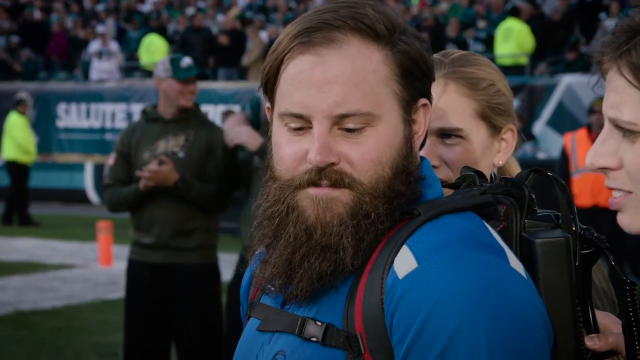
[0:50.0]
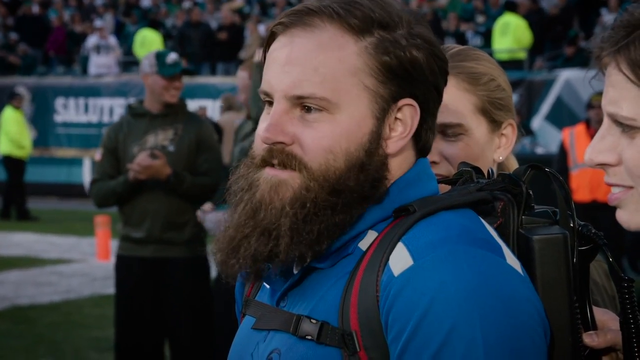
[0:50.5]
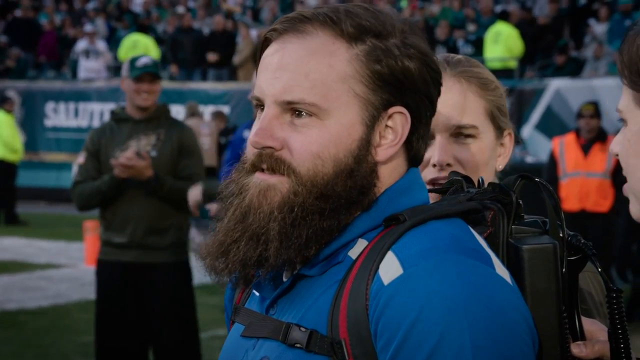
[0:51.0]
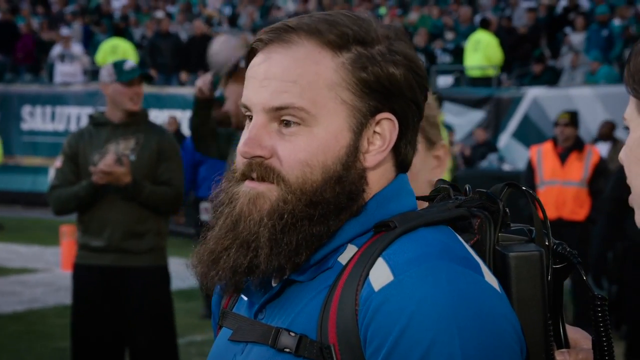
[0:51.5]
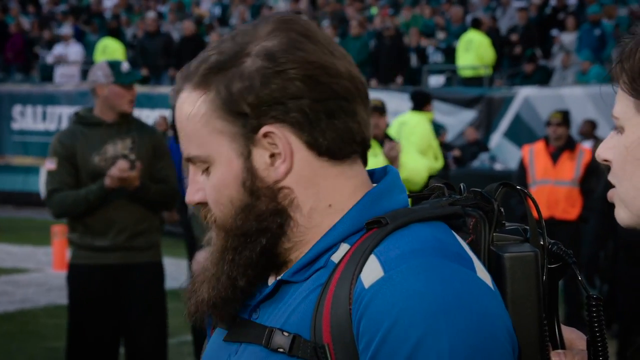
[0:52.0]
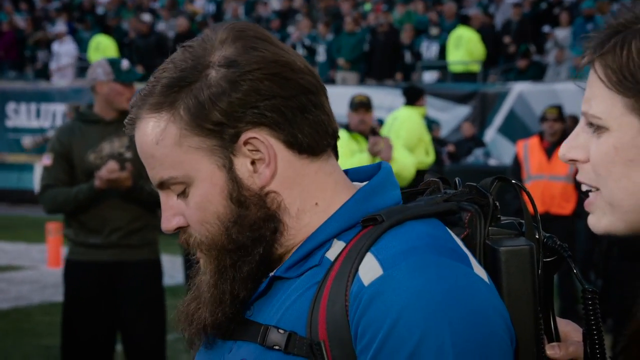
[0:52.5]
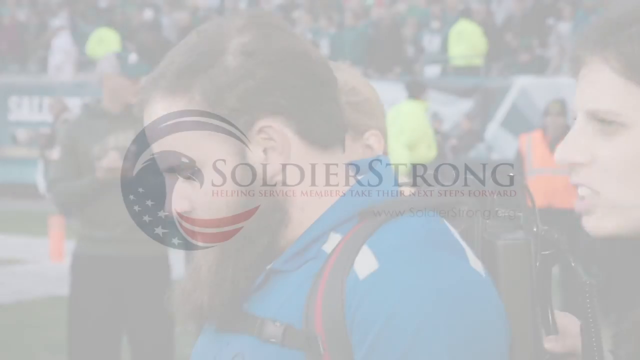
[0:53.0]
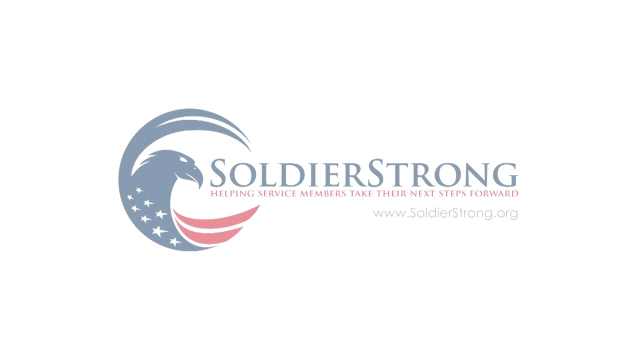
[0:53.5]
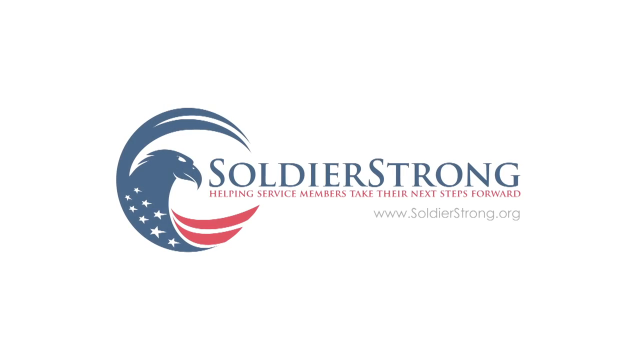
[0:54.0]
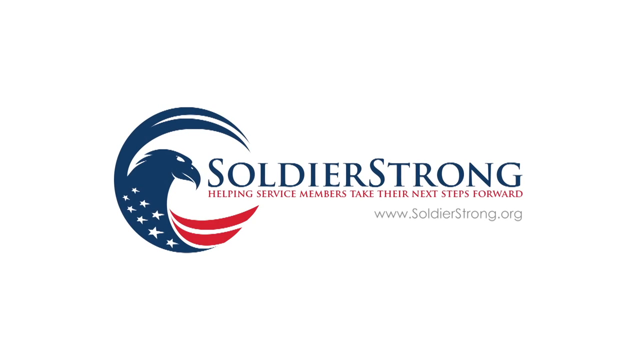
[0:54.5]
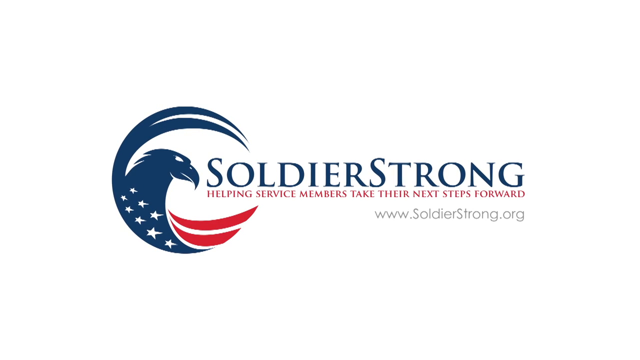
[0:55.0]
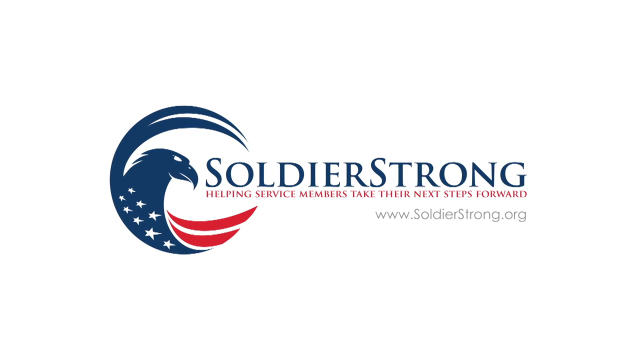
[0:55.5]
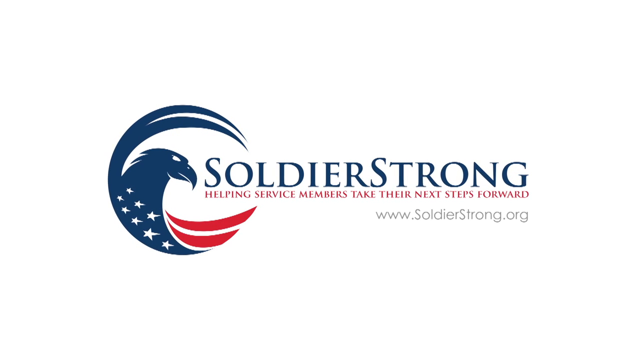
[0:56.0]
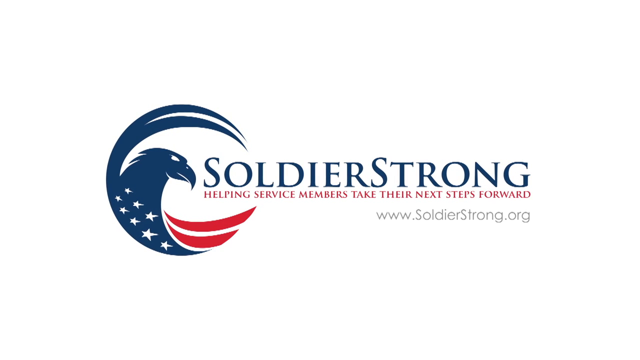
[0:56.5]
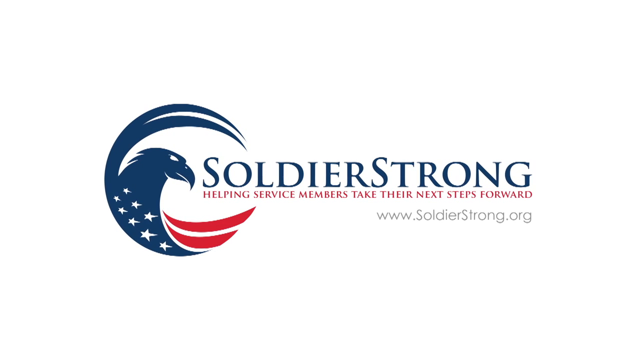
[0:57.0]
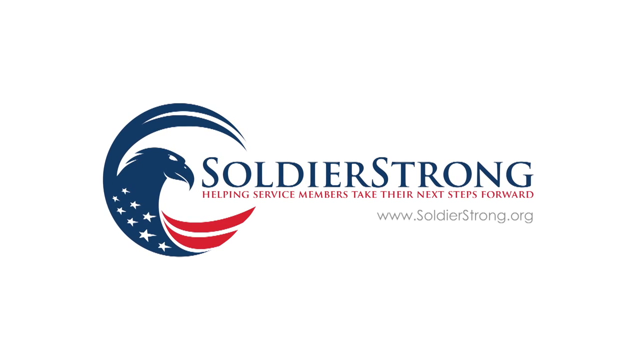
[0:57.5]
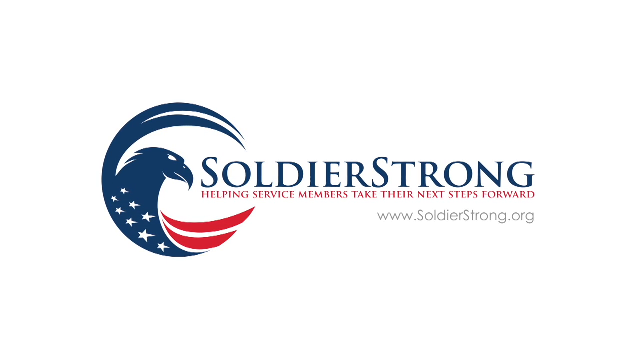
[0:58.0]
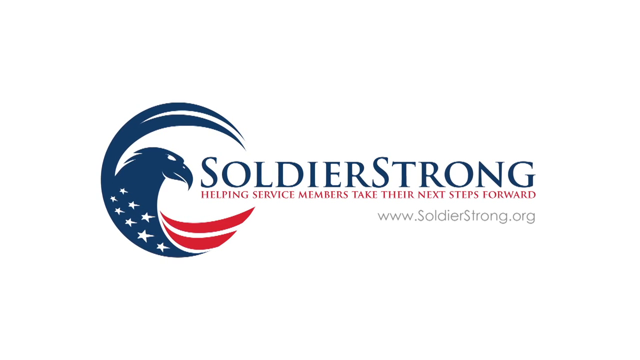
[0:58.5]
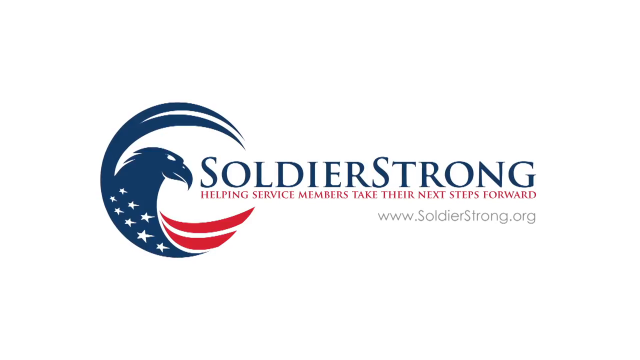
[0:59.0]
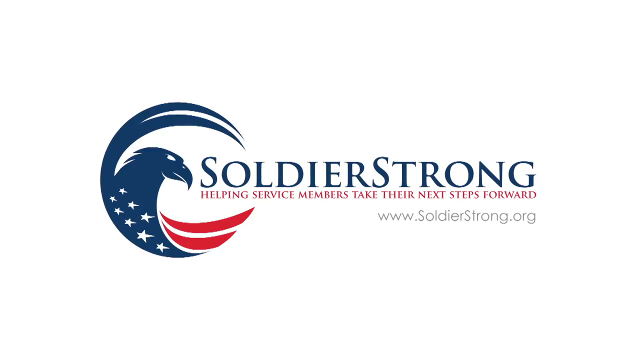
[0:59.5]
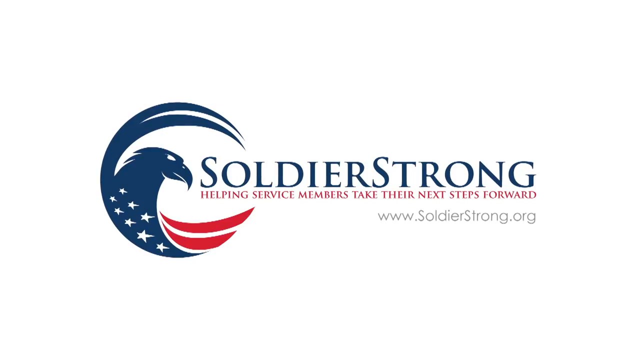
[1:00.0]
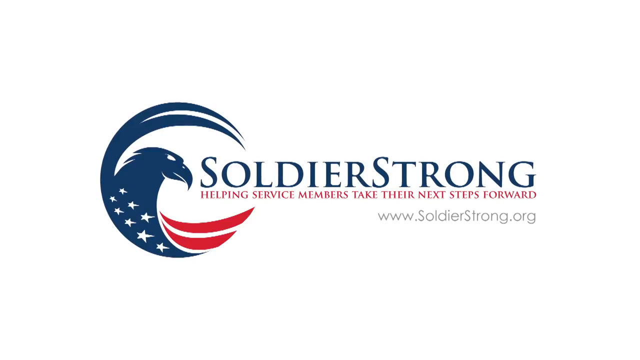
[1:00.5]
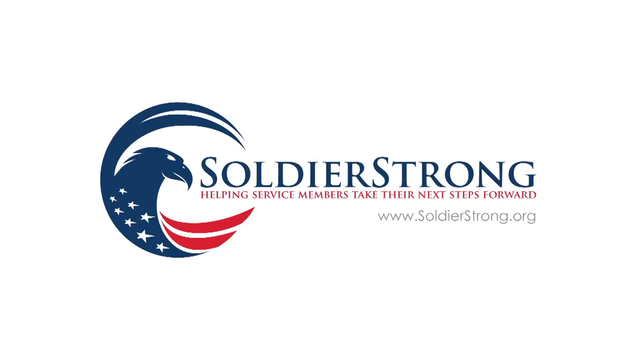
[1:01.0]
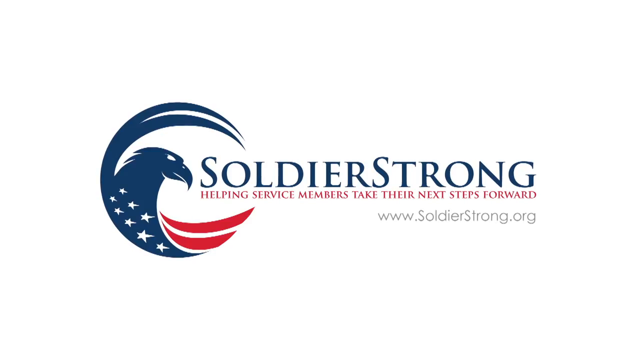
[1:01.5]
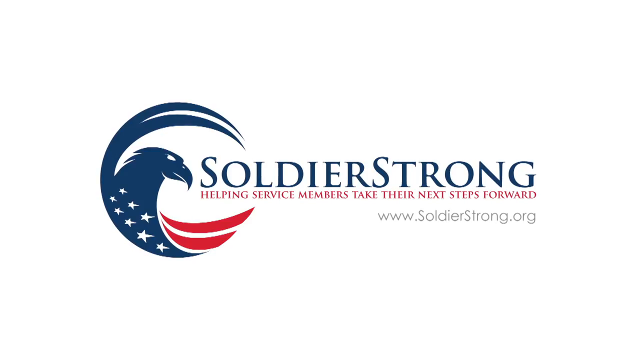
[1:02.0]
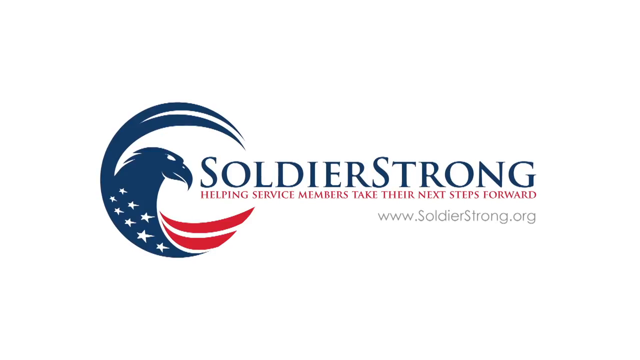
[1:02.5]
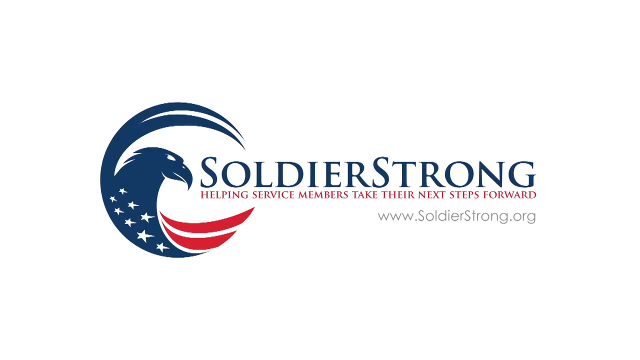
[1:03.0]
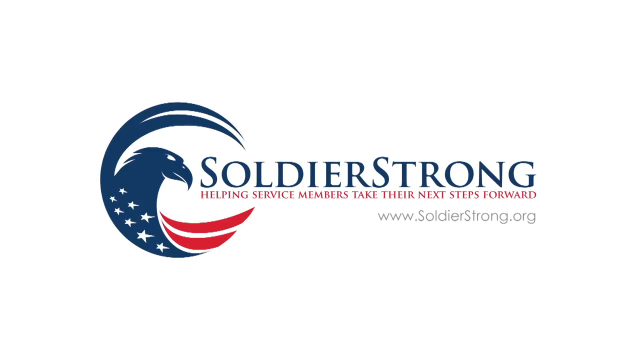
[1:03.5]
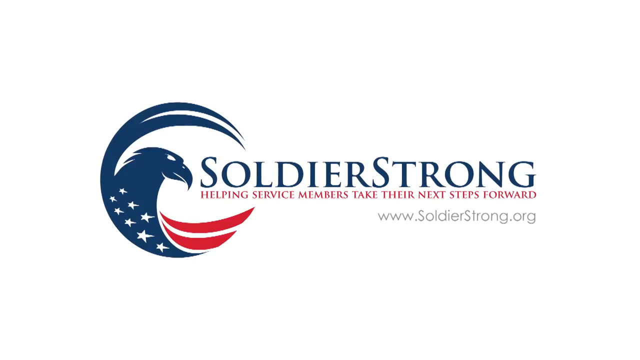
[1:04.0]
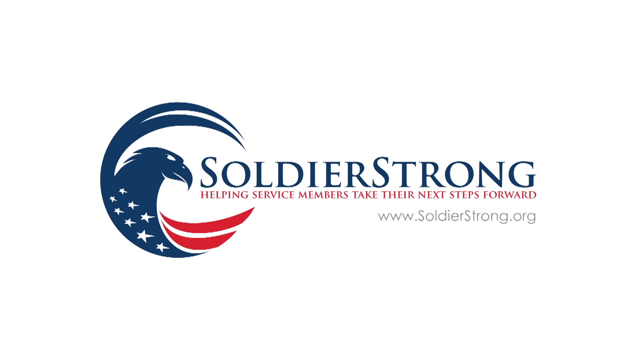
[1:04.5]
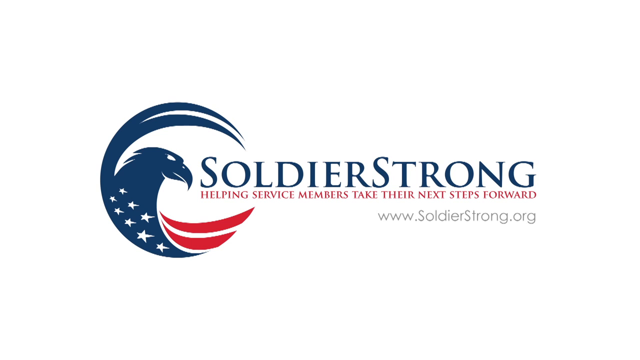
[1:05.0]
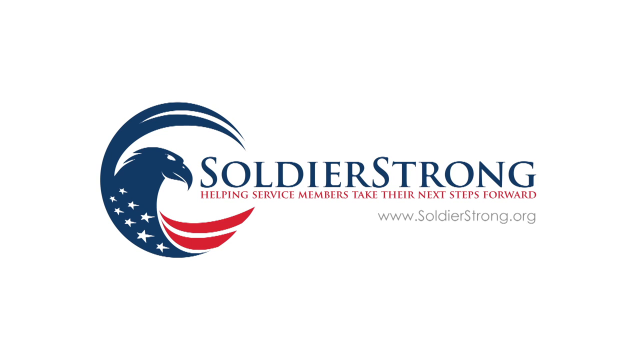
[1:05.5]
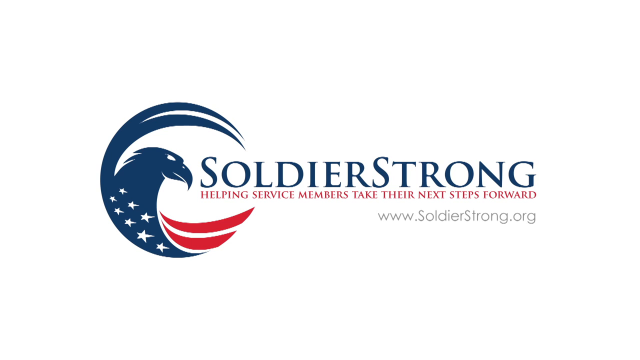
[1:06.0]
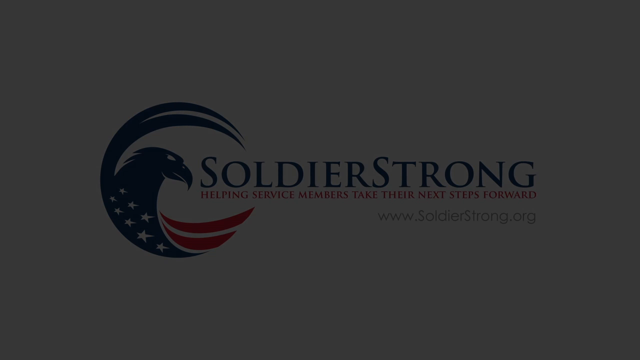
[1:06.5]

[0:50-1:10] The man in the blue shirt is standing, with the two women still behind him on each side; each of their faces is partially visible. His eyebrows are raised slightly, as if he is amazed. He slowly tilts his head down and looks toward his feet. The scene changes to a white background with a red, white and blue emblem of an eagle and an American flag. Blue text reads "soldier strong," below it red text reads "helping service members take their first steps forward," and below that, in gray text, is the website "www.soldierstrong.org." The graphic slowly zooms in closer until it takes up most of the center of the screen, and it stays in this position for approximately five seconds. It then begins to fade to black until the video ends.